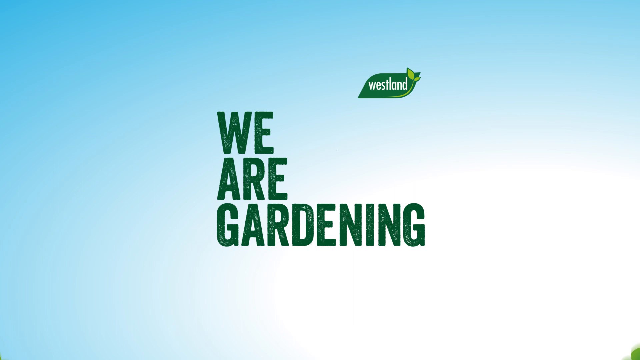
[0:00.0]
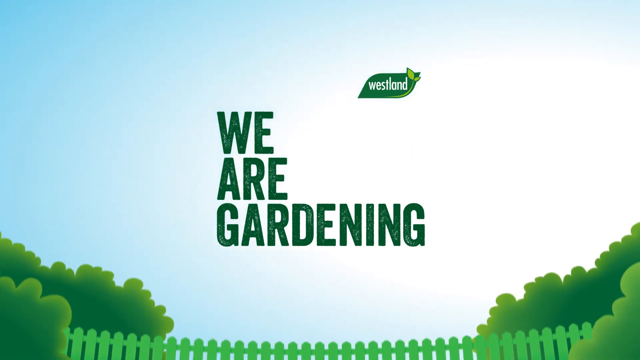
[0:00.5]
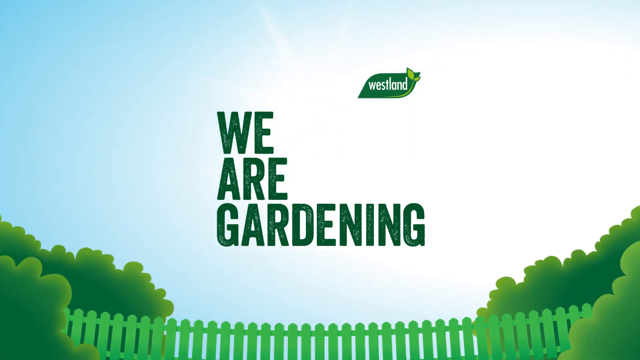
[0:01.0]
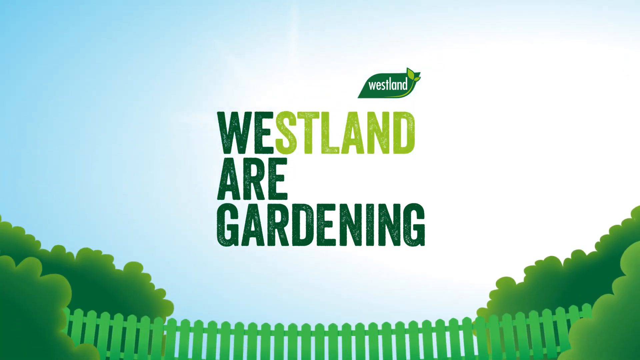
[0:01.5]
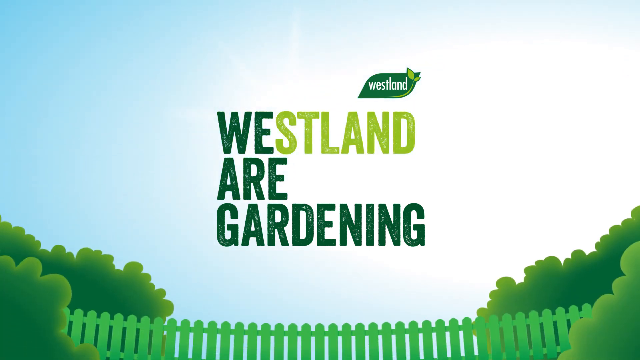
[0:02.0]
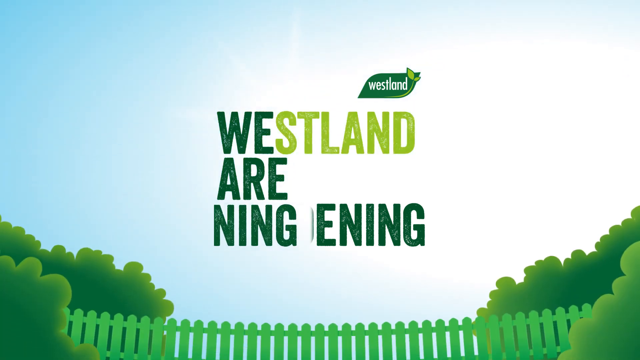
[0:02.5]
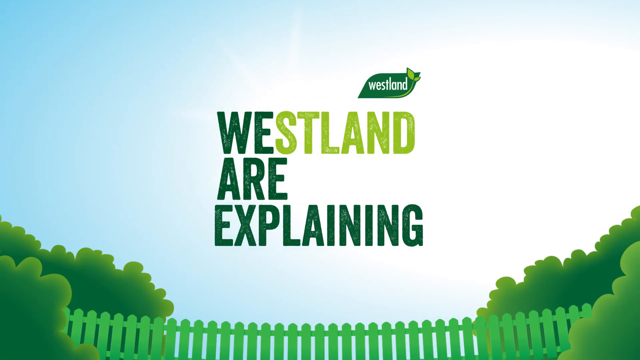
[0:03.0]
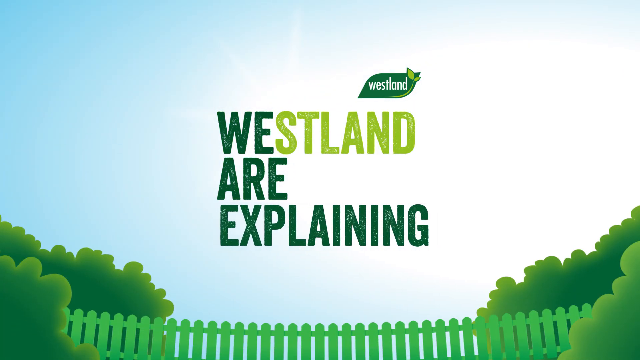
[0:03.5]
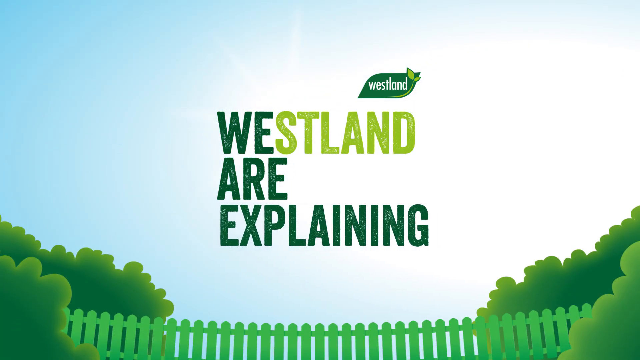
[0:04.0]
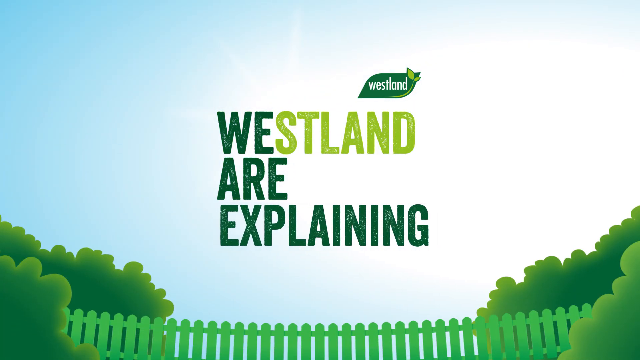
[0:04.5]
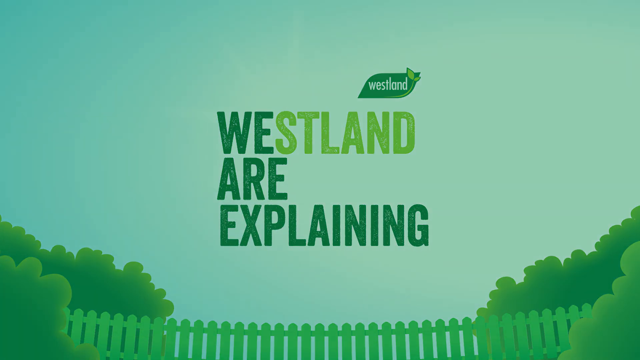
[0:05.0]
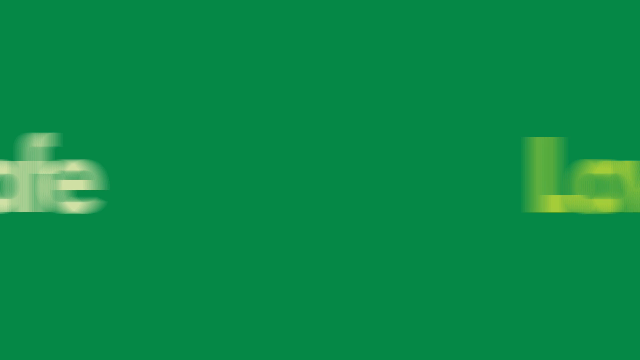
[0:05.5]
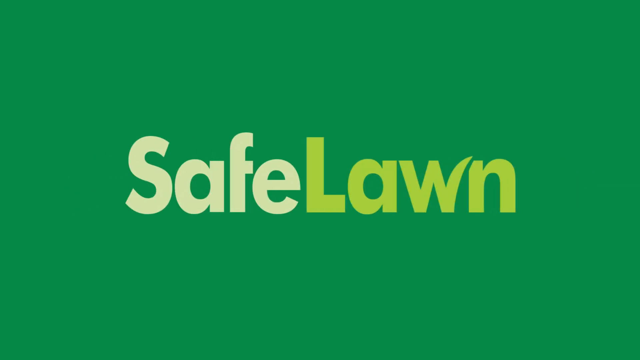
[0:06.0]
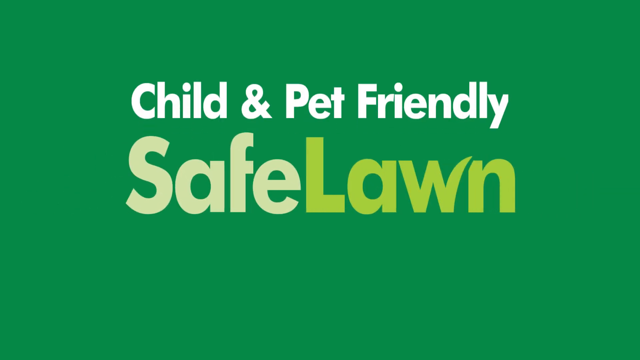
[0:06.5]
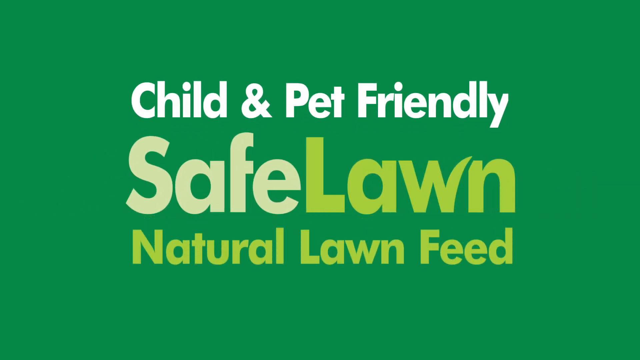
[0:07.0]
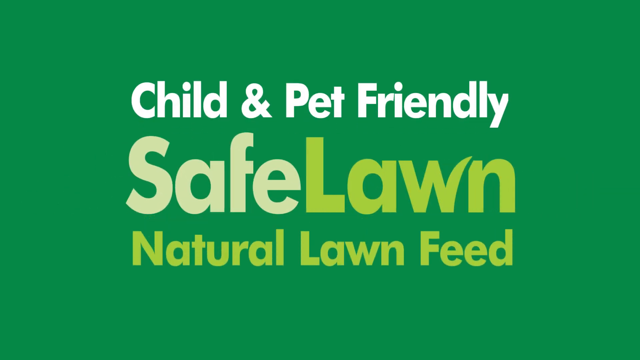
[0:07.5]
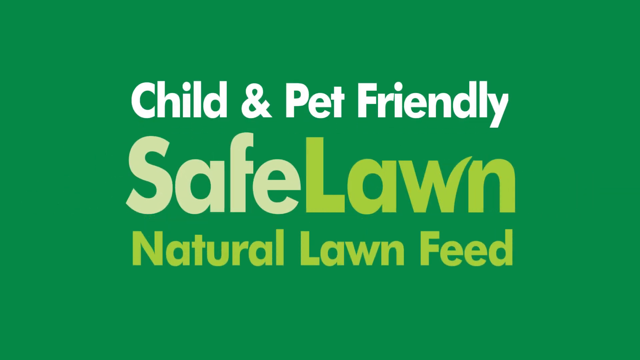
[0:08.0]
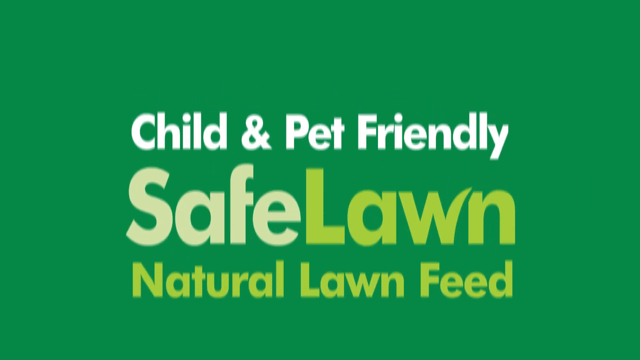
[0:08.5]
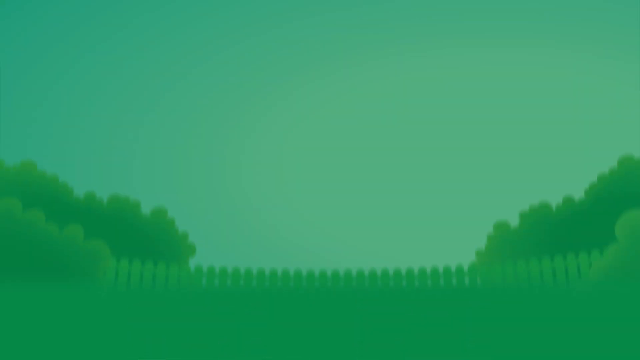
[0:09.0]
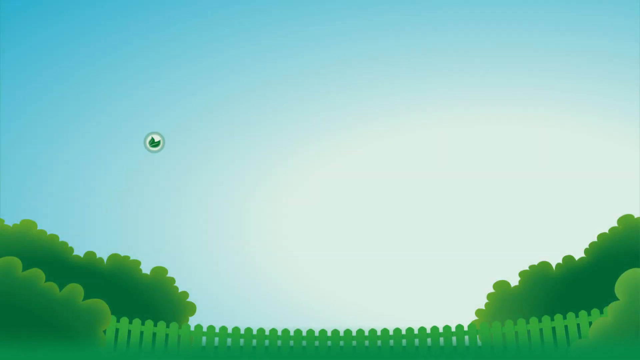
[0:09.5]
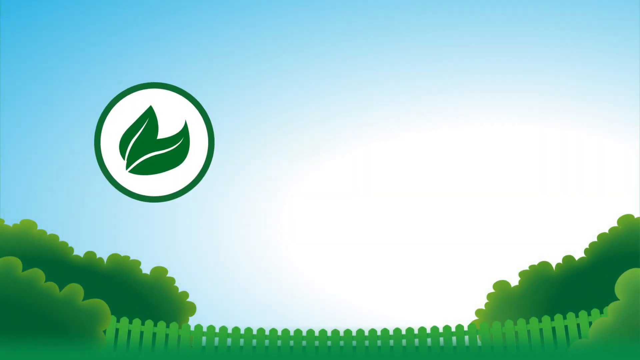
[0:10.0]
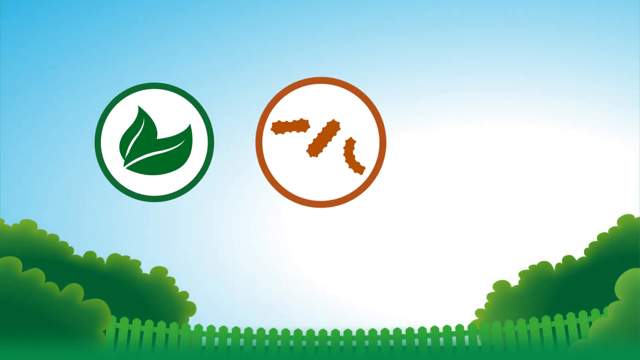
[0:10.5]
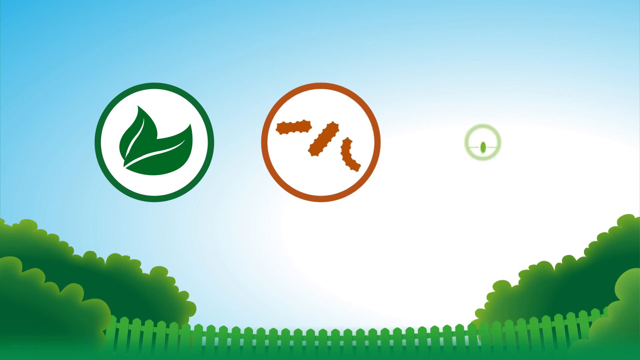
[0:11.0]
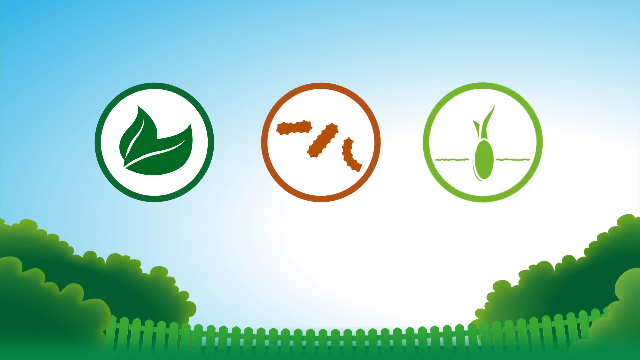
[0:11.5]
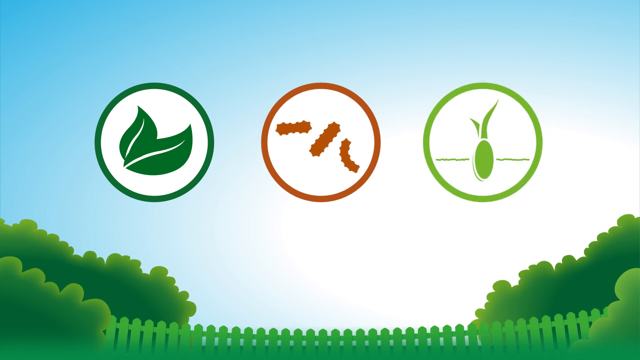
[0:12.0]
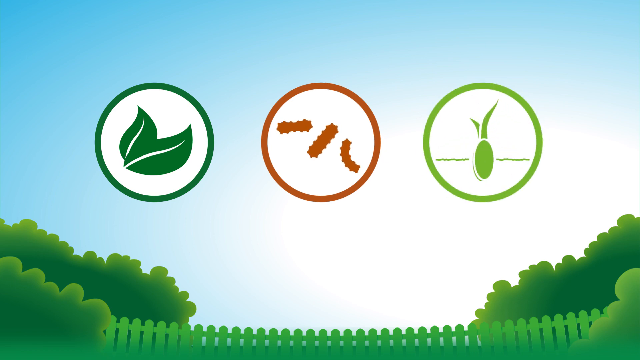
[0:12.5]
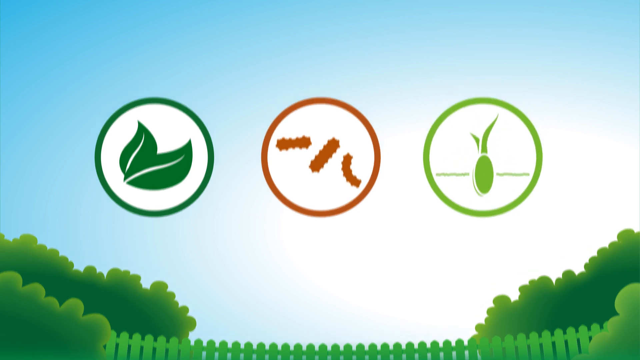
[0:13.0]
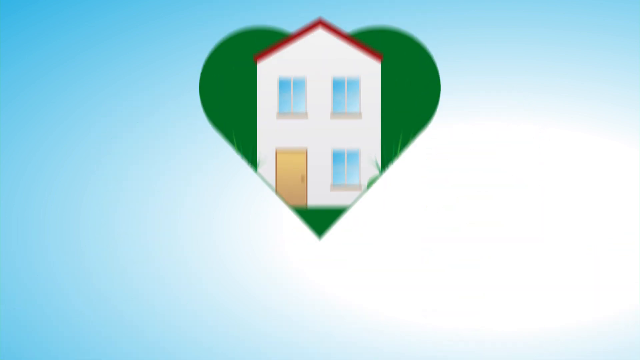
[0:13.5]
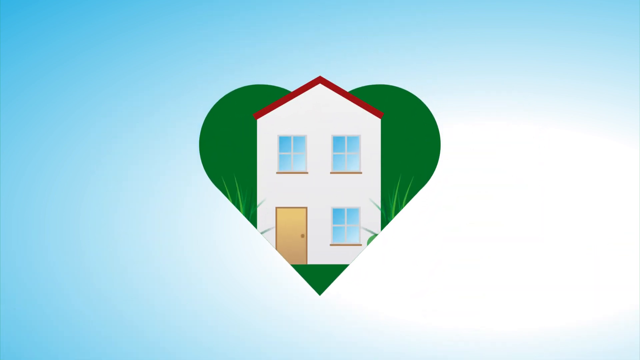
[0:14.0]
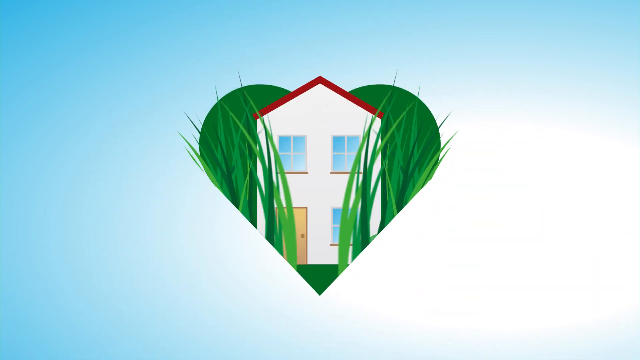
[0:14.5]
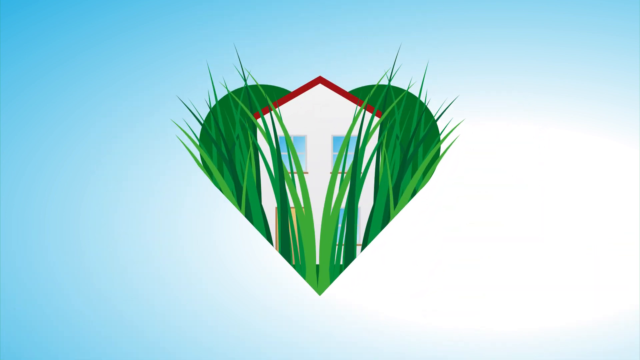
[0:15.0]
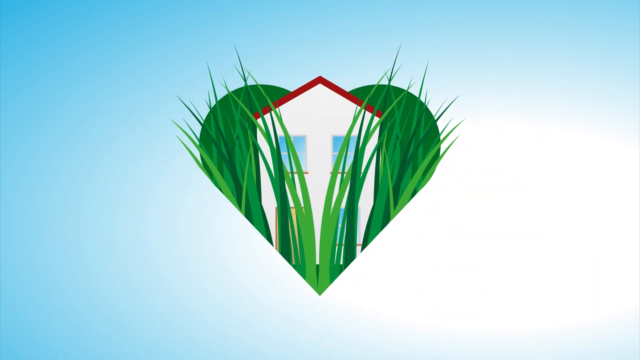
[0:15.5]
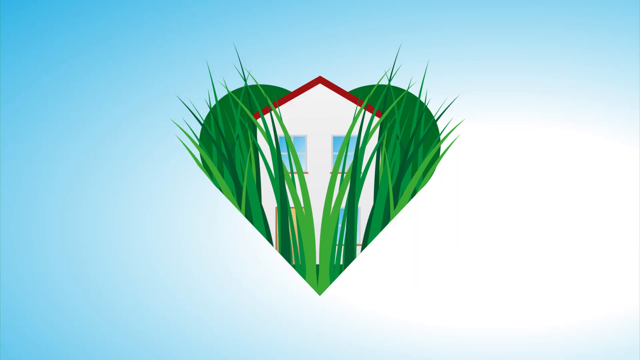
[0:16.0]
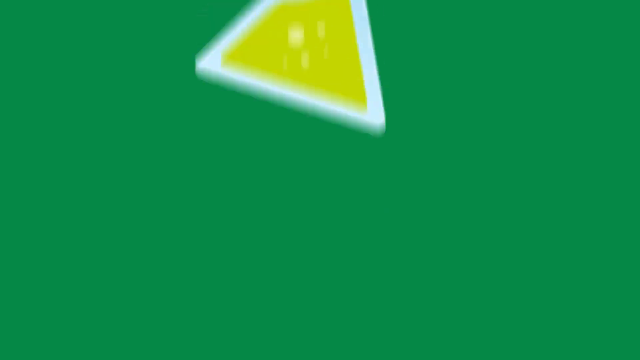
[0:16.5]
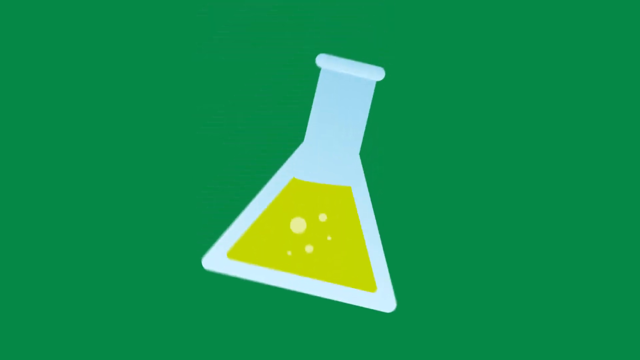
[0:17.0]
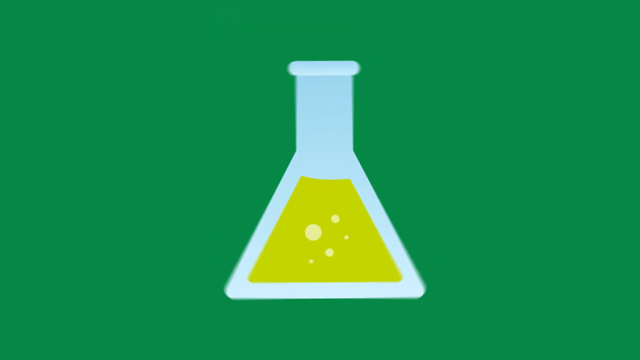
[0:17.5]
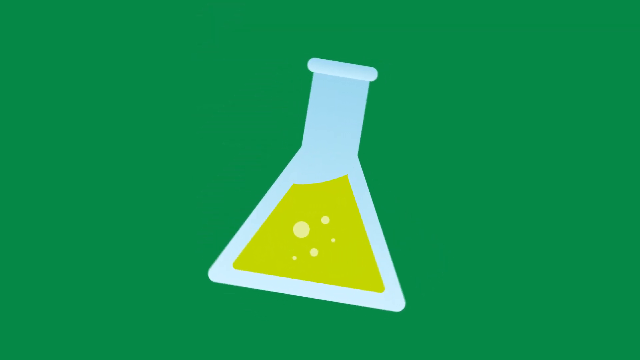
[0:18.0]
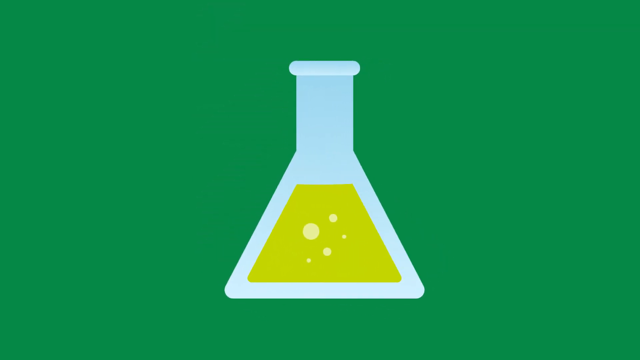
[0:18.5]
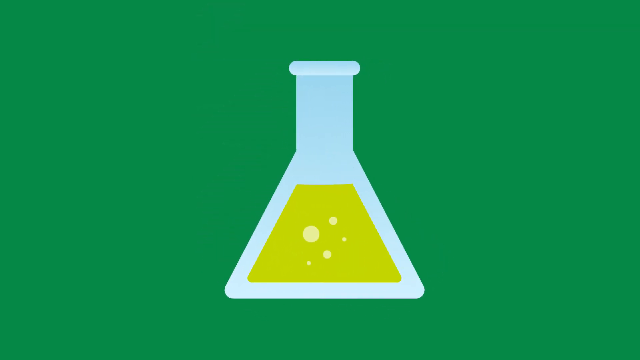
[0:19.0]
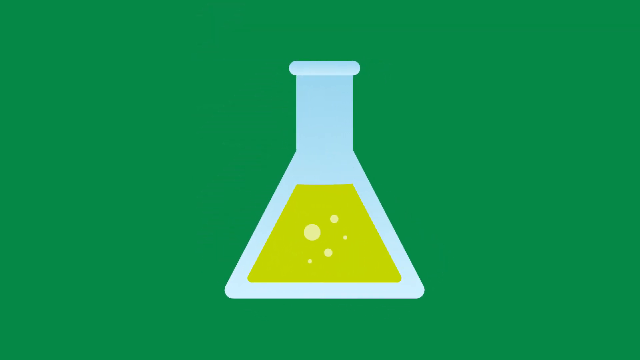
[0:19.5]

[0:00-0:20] The video opens with a lot of green and a lot of grass. The words "we are gardening" appear, and later there is something about "safe lawn." Something that looks like a chemical is visible. In a house setting, healthy, very green grass is growing in front of the house, and its texture looks healthy. A label reads "Westland," which appears to be the name of the company.